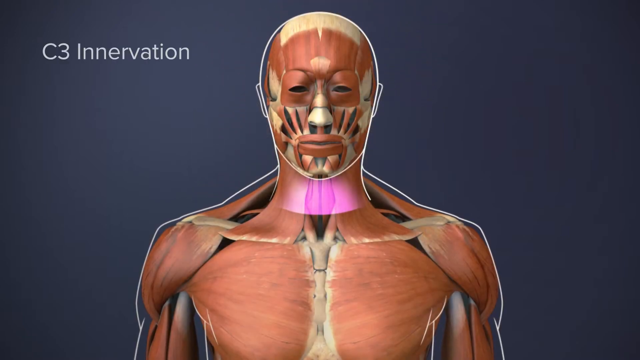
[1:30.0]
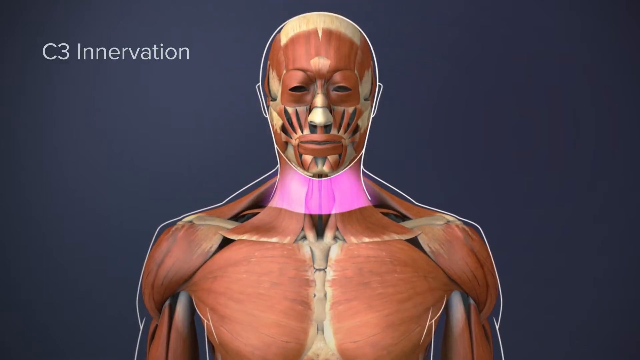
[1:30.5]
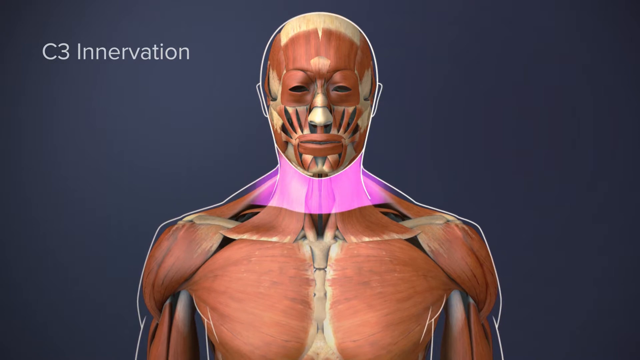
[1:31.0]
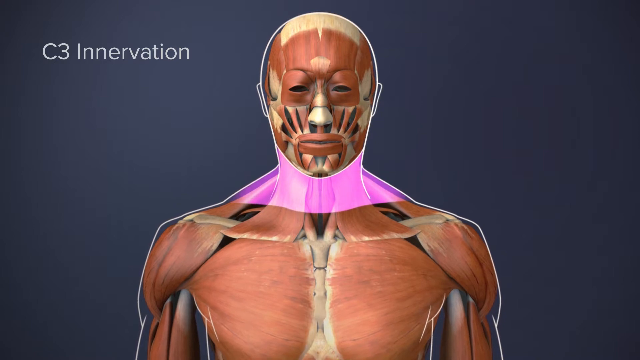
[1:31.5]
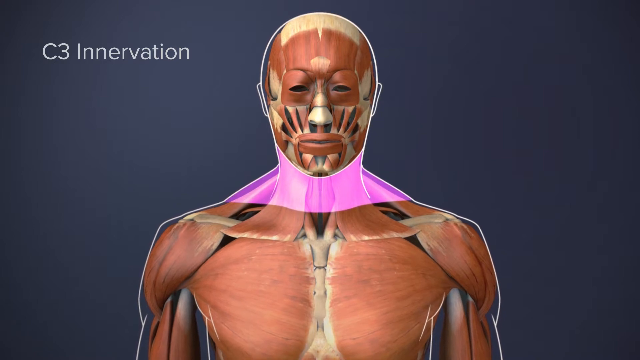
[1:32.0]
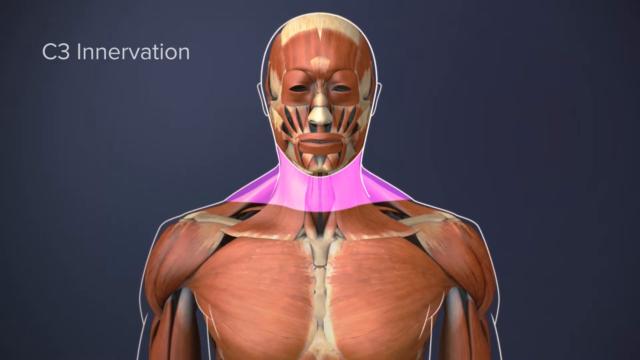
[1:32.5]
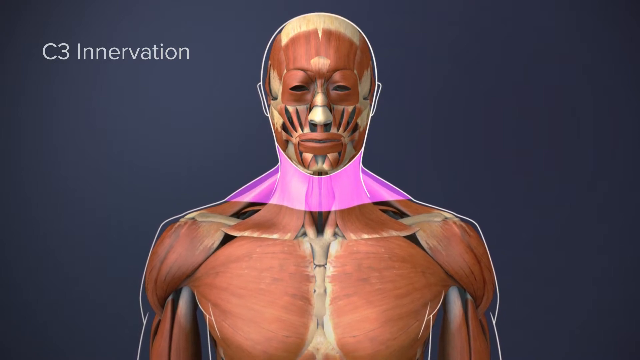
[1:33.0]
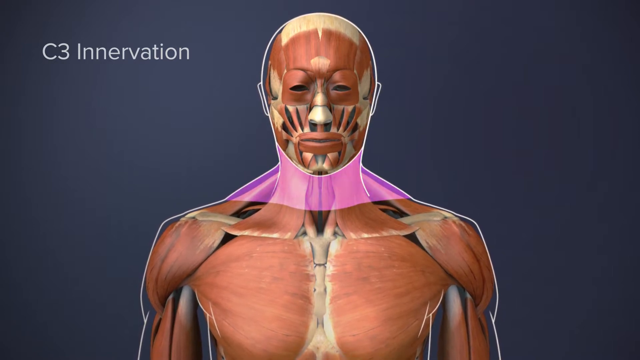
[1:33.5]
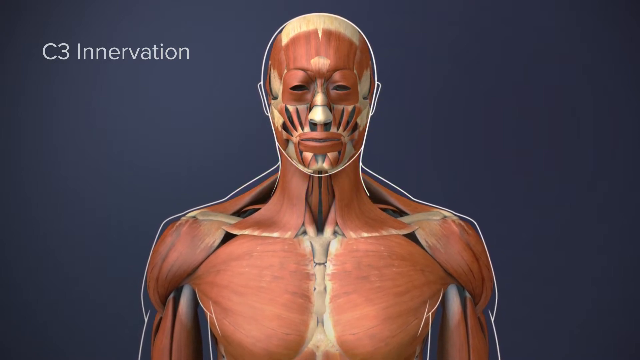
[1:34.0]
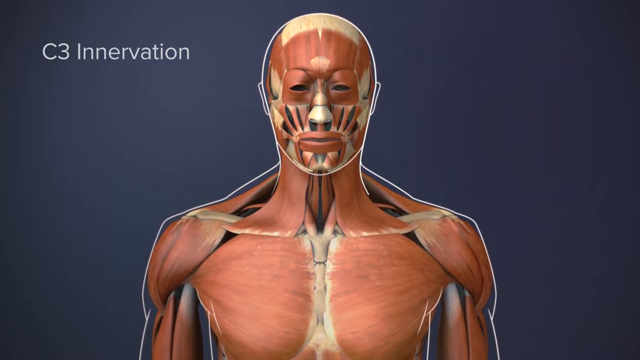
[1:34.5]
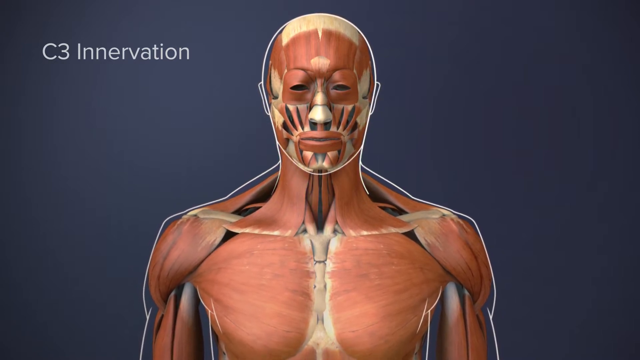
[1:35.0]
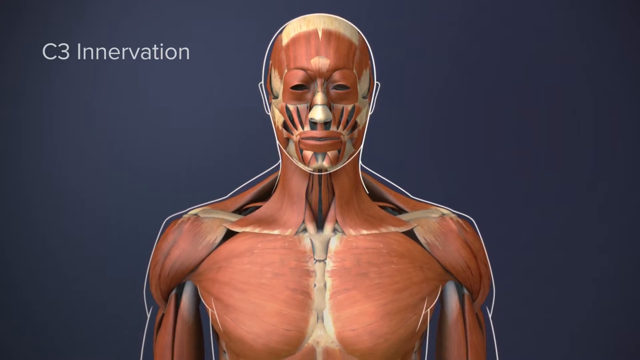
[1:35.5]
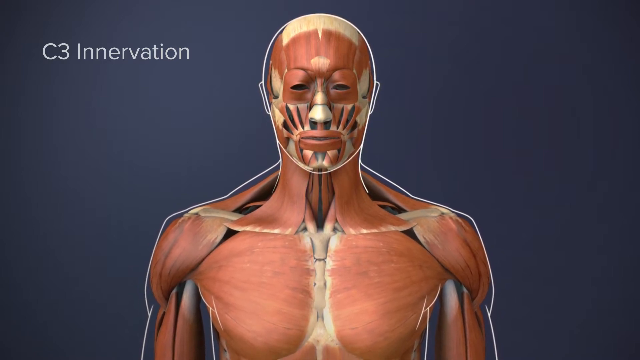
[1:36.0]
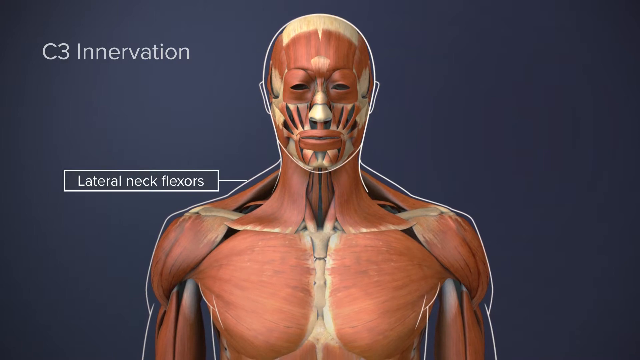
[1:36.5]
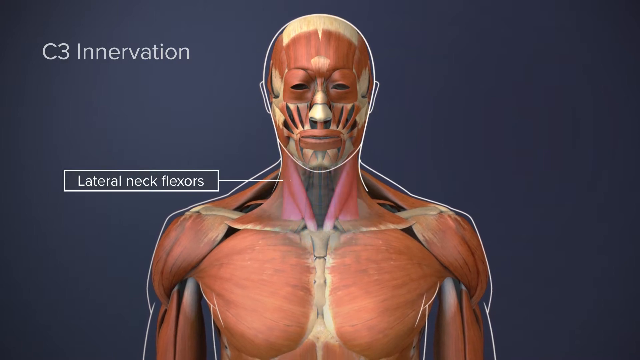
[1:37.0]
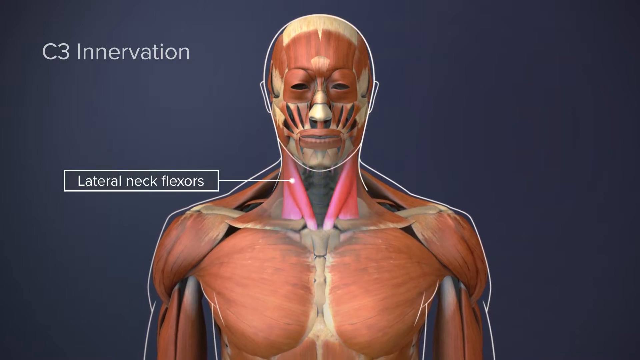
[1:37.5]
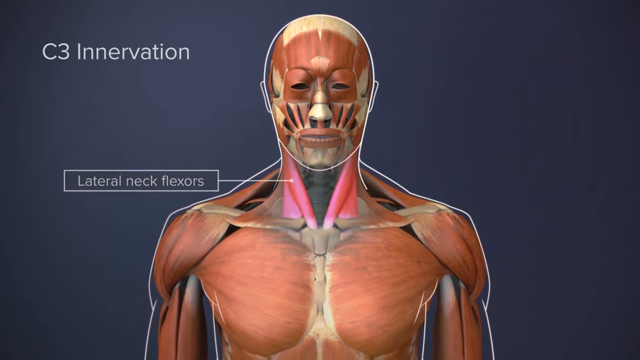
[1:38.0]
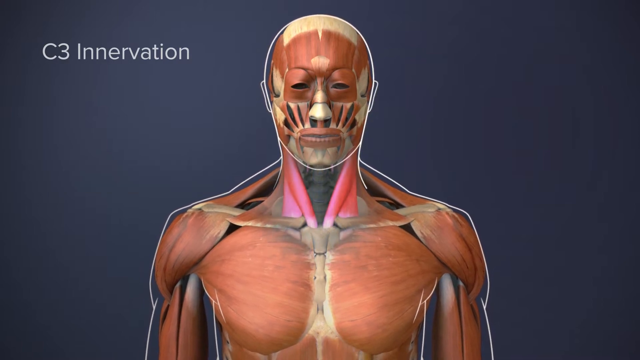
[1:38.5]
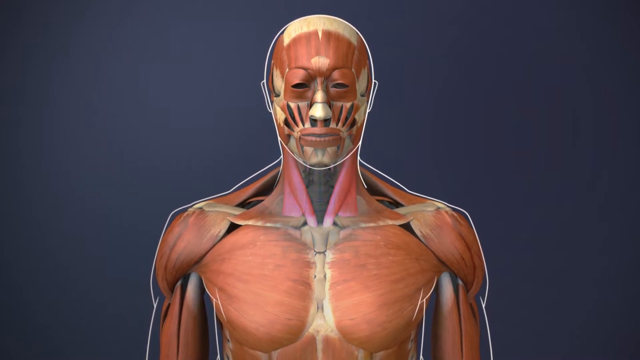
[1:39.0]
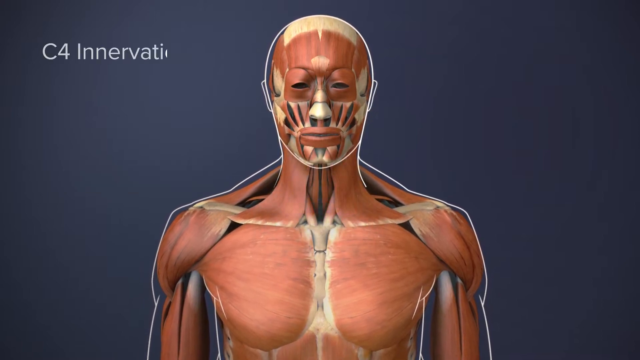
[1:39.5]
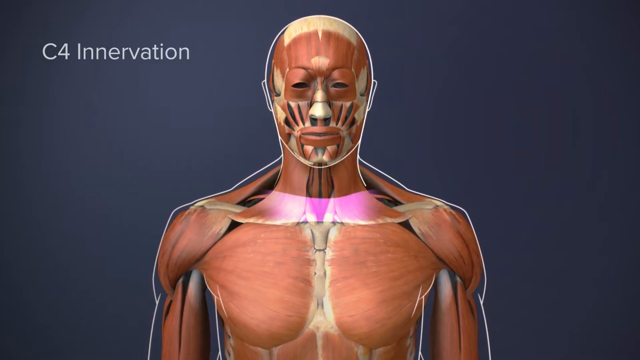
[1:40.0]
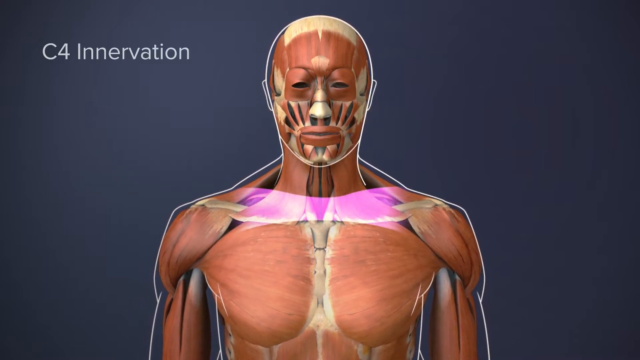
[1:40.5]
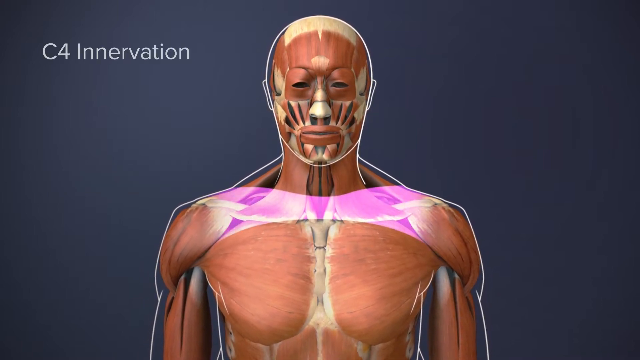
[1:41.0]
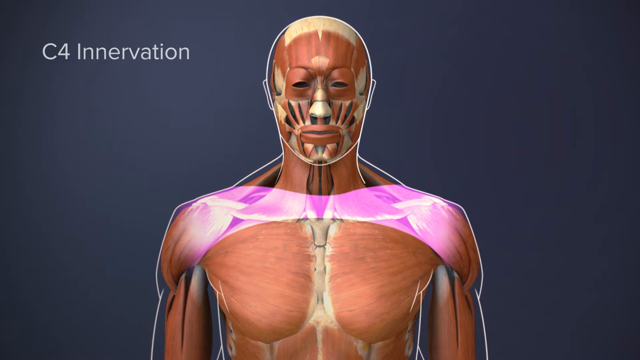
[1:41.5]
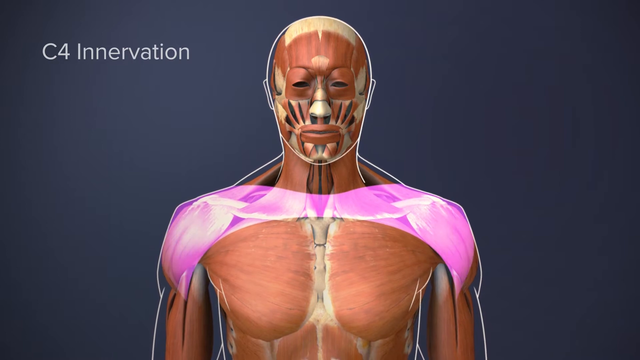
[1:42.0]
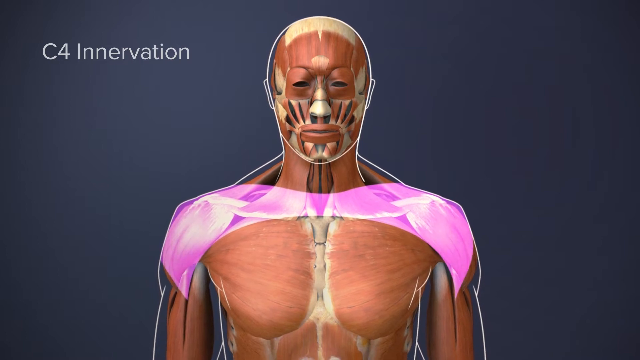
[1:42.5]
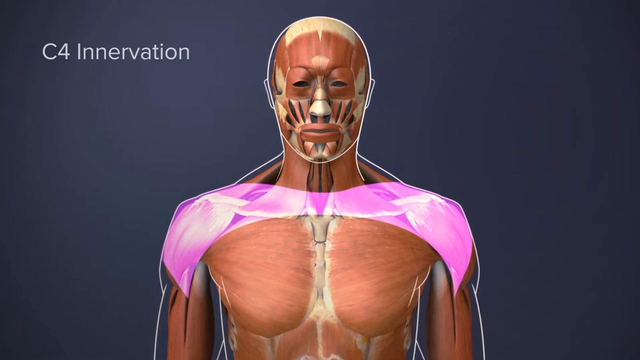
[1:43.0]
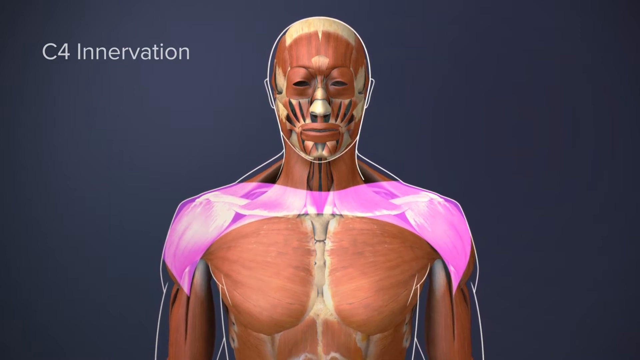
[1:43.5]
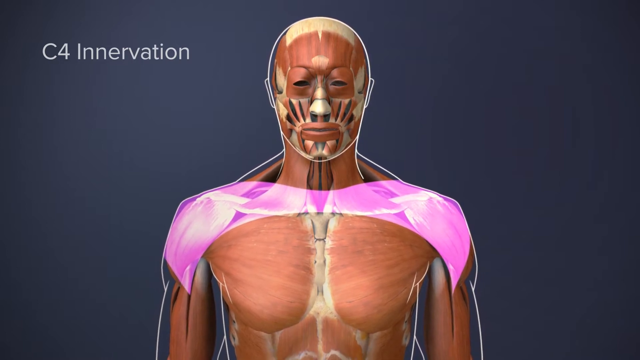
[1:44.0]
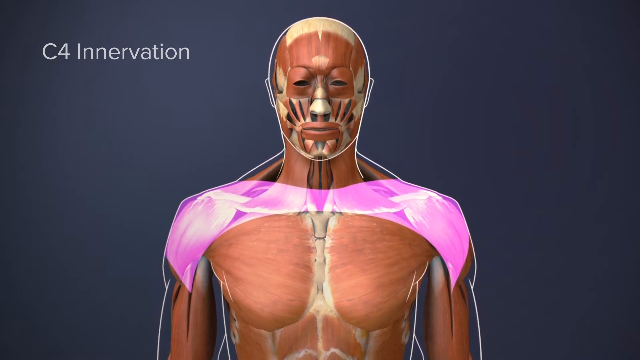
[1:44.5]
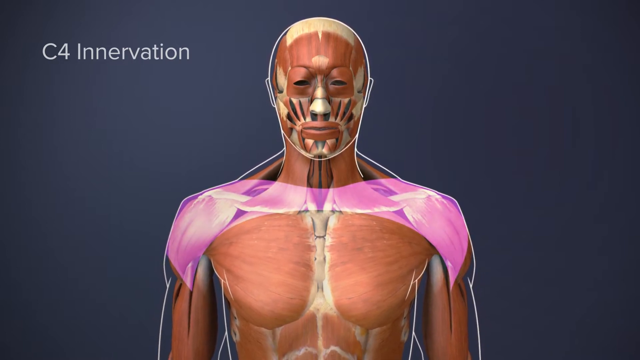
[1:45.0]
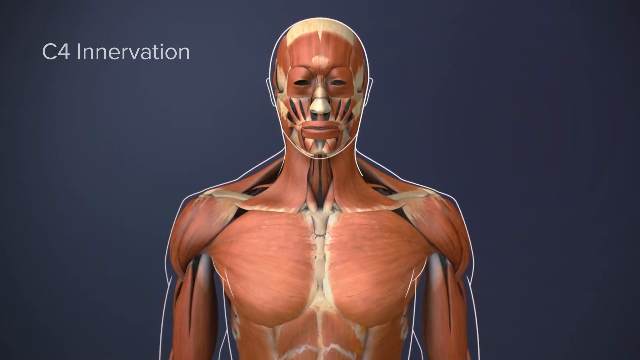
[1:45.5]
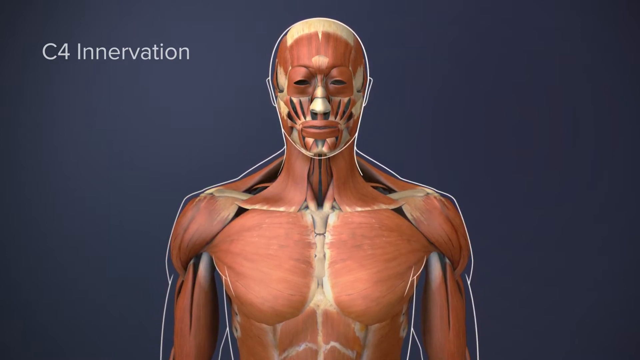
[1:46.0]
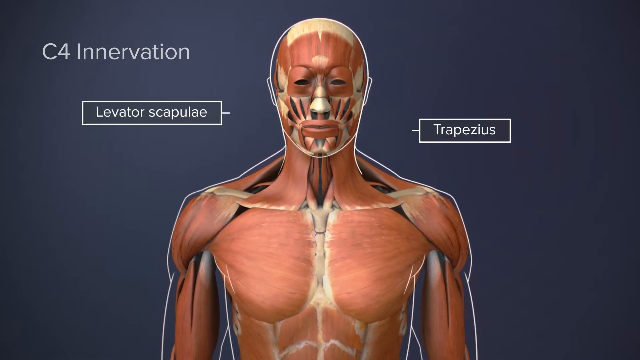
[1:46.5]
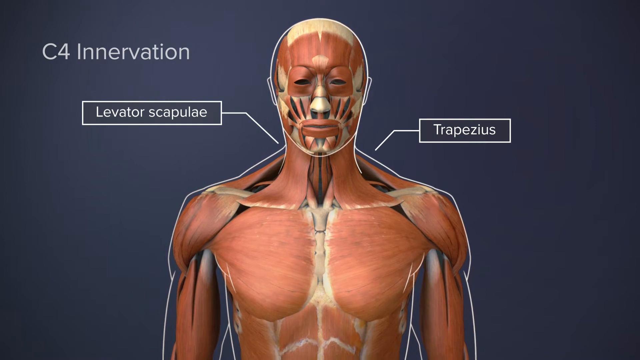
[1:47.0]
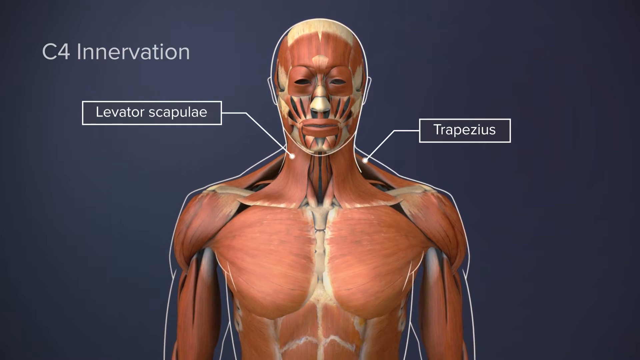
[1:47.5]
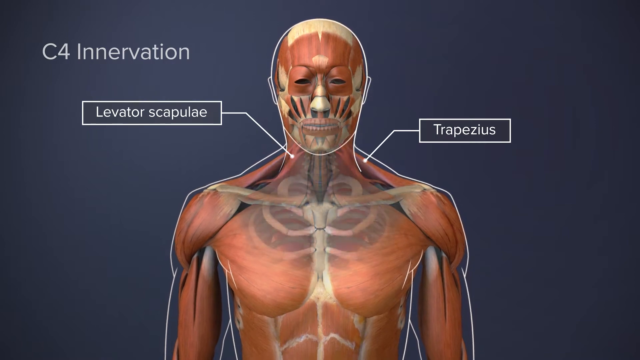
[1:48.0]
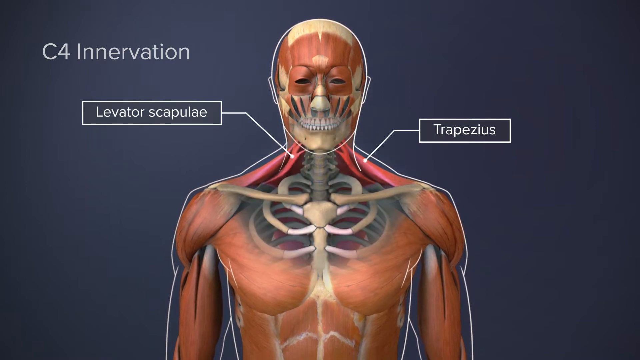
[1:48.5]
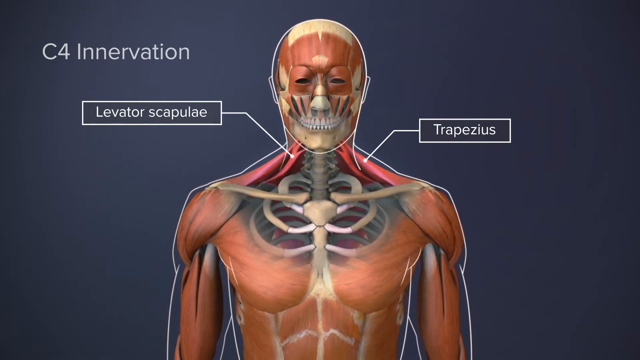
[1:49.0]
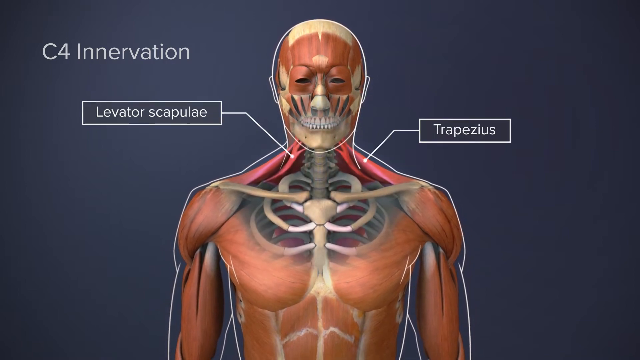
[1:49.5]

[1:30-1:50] A human body faces the viewer, with muscles and tendons visible throughout the body. A section of the neck is highlighted light purple, and a label in the top left reads "C3 innervation". The purple highlight on the neck disappears, and a label appears on the left side reading "lateral neck flexors", pointing to the left side of the neck. Another title in the top left corner then reads "C4 innervation", and the front shoulder, side shoulder and upper chest area are highlighted light purple. The highlight disappears, and two labels appear, one on each side: on the right, "trapezius" points to the trapezius muscle on the right side, and the other, "Levator scapulae", points to the left side of the neck.